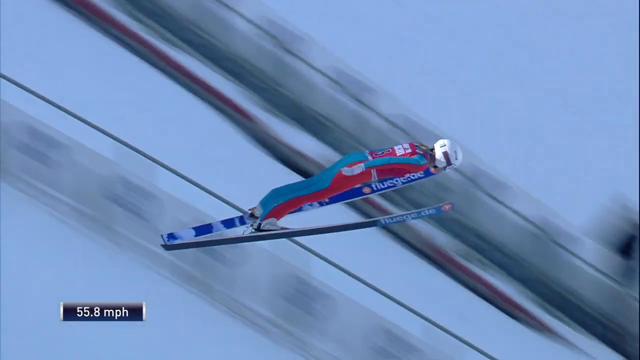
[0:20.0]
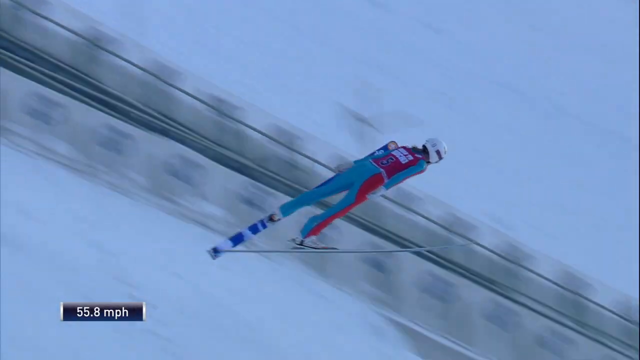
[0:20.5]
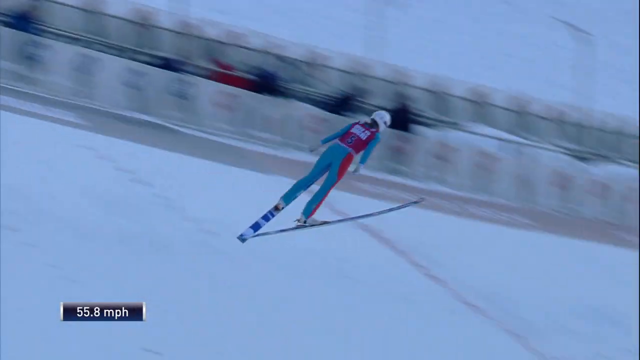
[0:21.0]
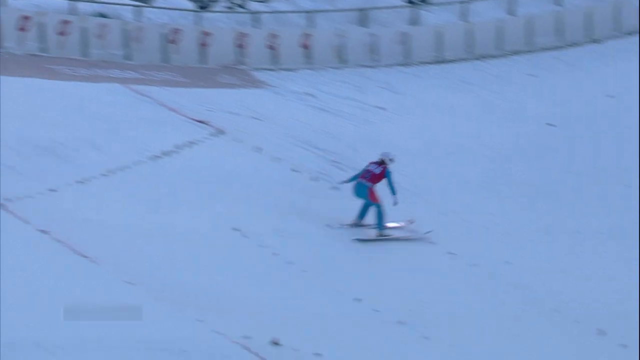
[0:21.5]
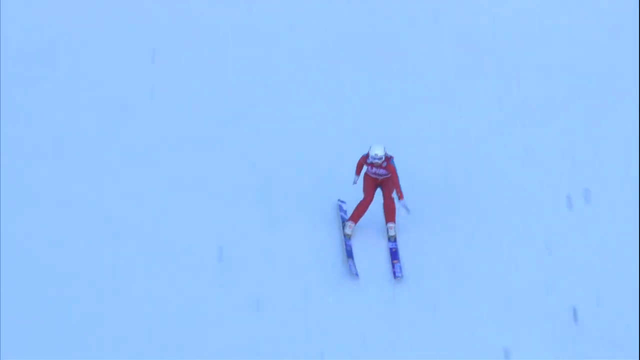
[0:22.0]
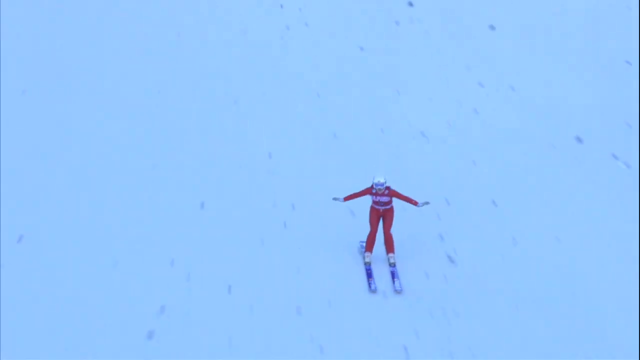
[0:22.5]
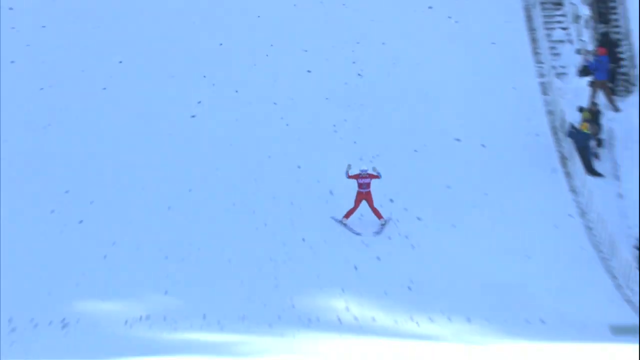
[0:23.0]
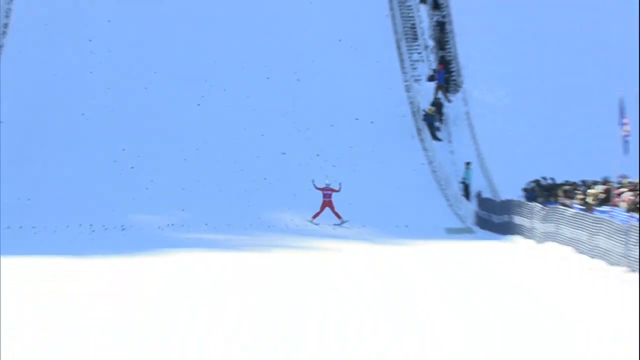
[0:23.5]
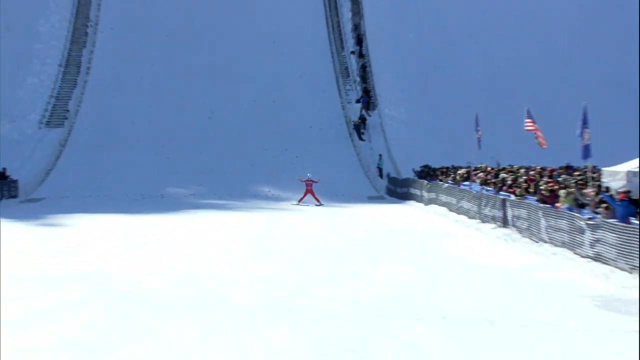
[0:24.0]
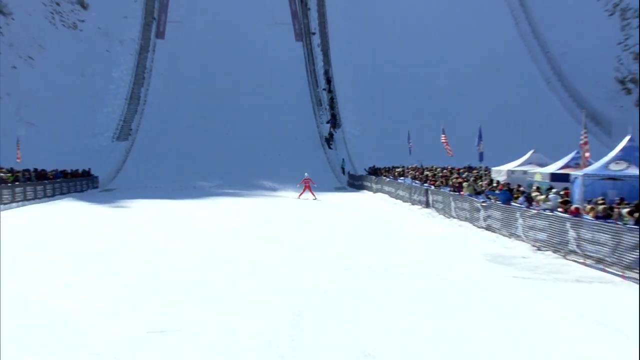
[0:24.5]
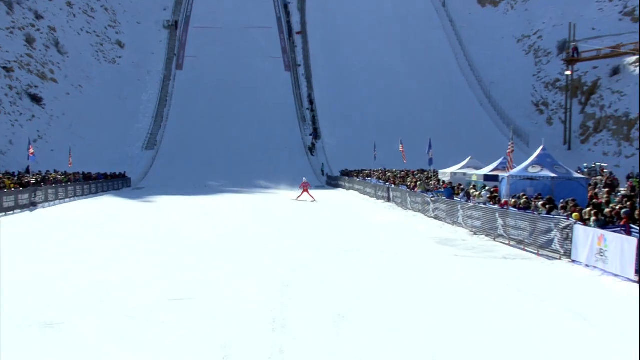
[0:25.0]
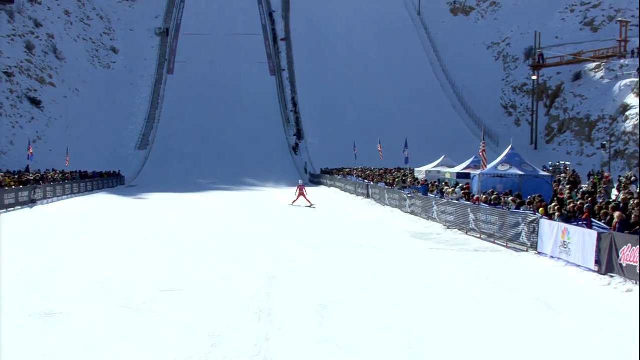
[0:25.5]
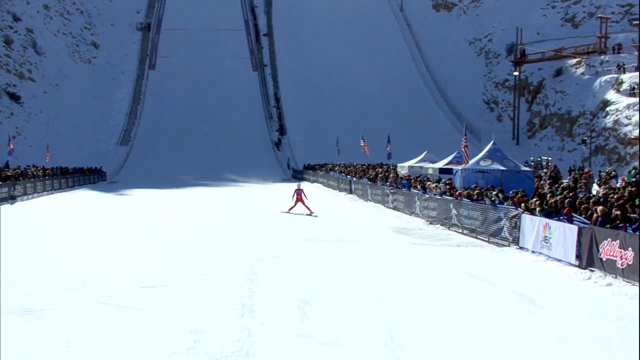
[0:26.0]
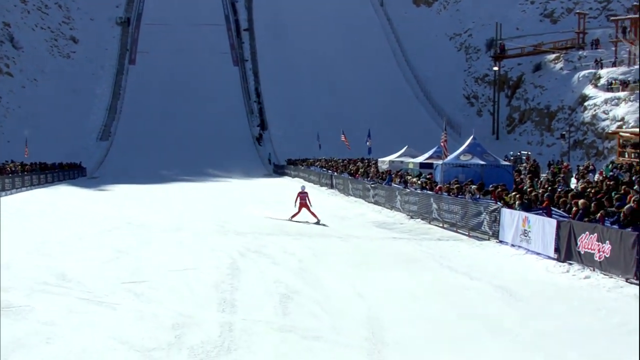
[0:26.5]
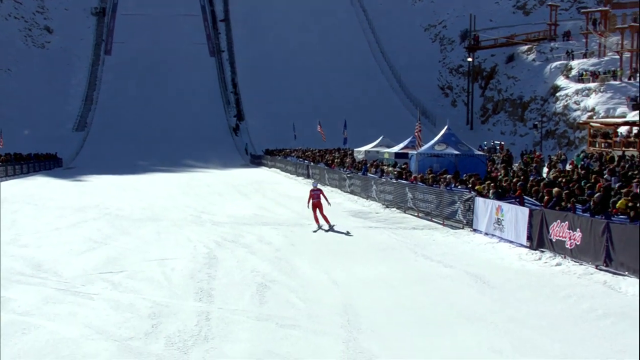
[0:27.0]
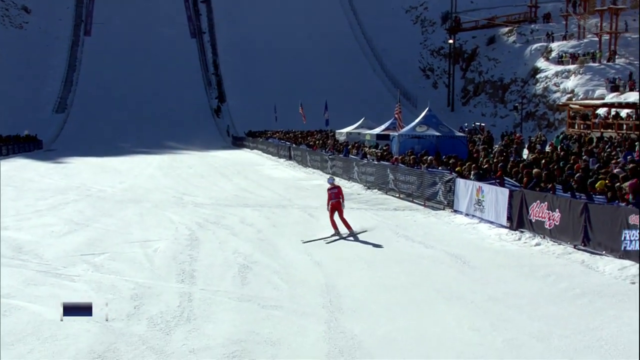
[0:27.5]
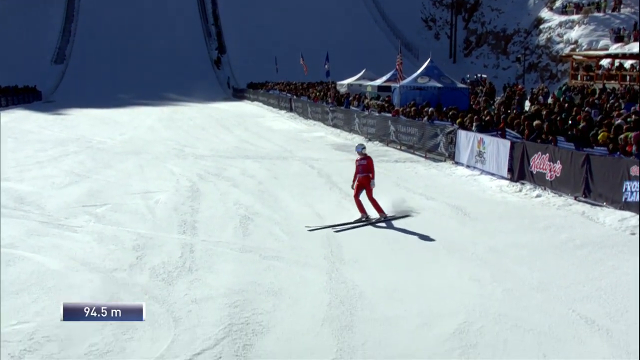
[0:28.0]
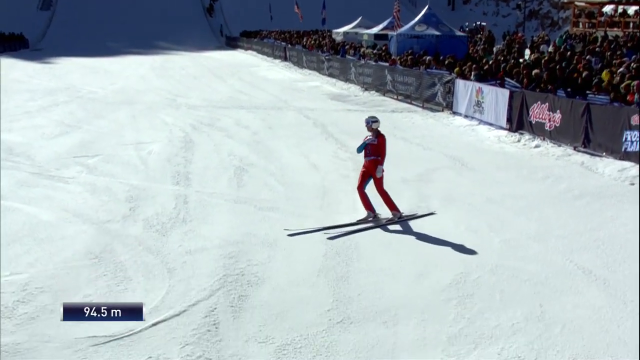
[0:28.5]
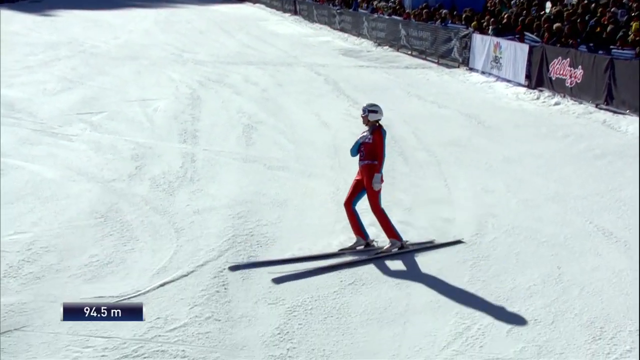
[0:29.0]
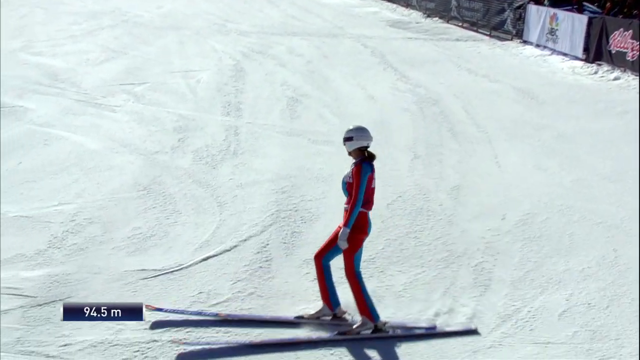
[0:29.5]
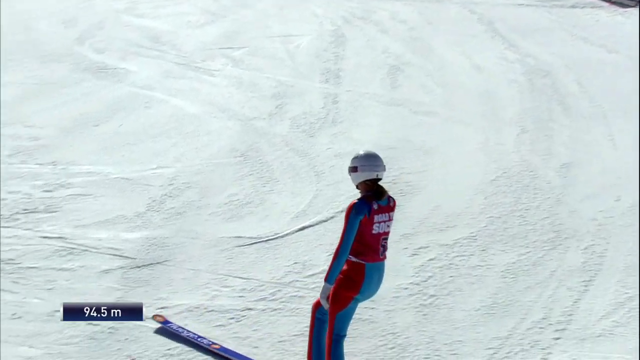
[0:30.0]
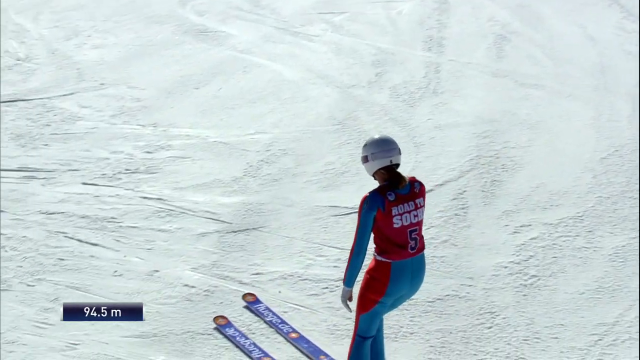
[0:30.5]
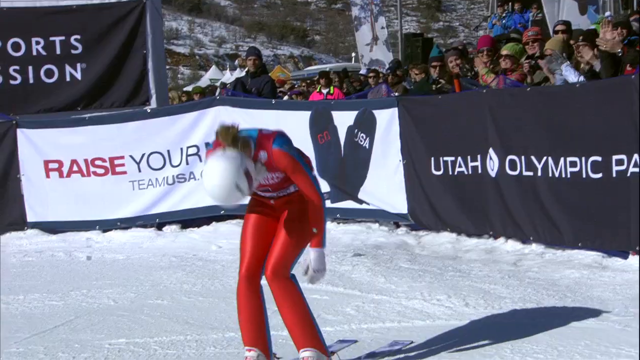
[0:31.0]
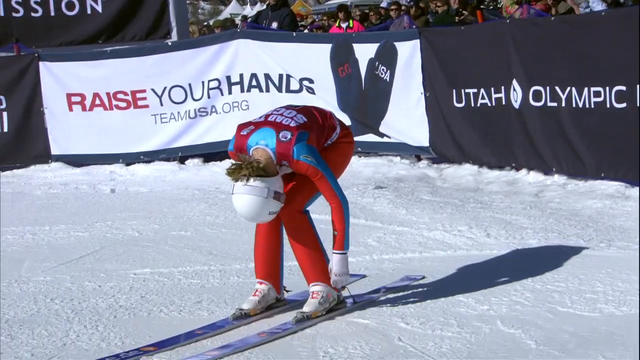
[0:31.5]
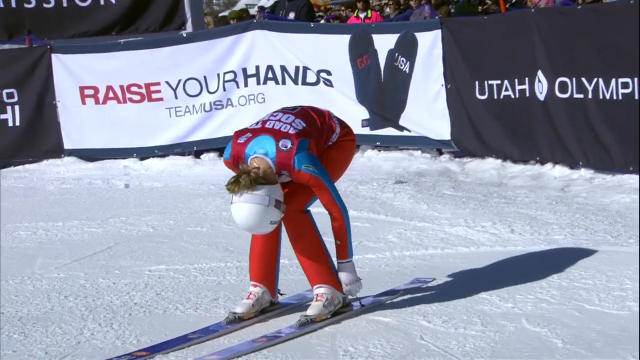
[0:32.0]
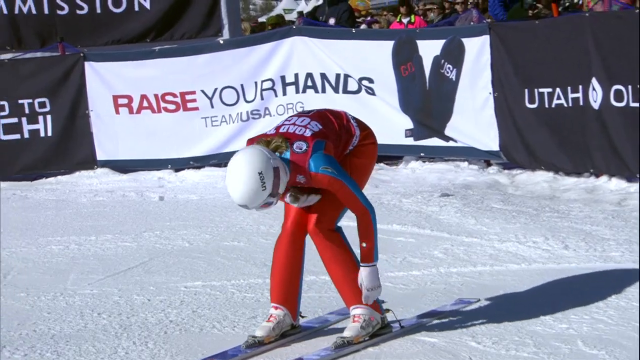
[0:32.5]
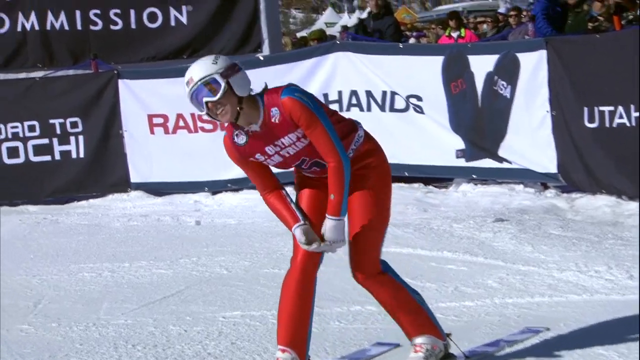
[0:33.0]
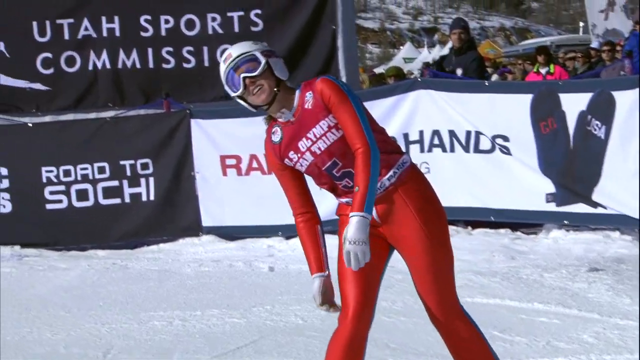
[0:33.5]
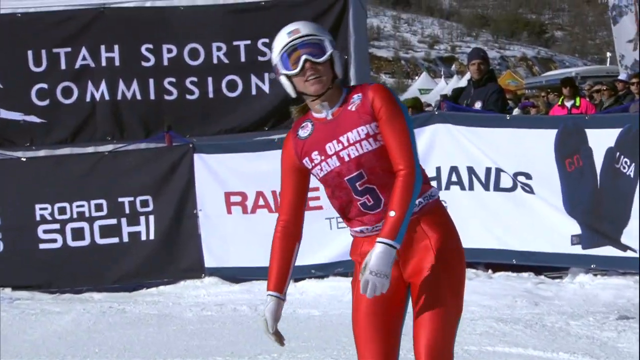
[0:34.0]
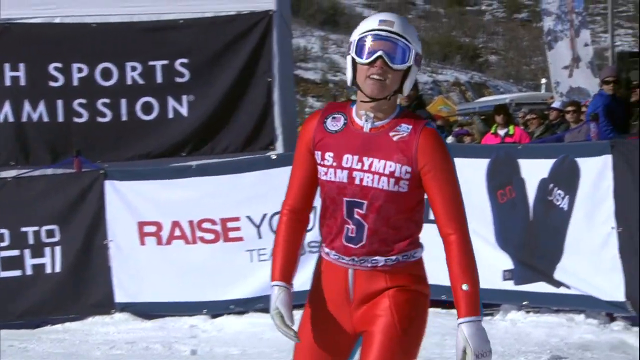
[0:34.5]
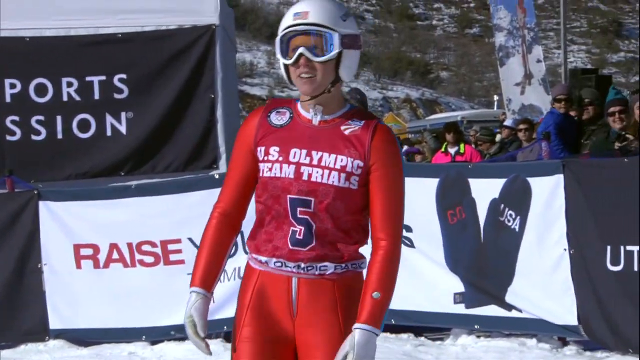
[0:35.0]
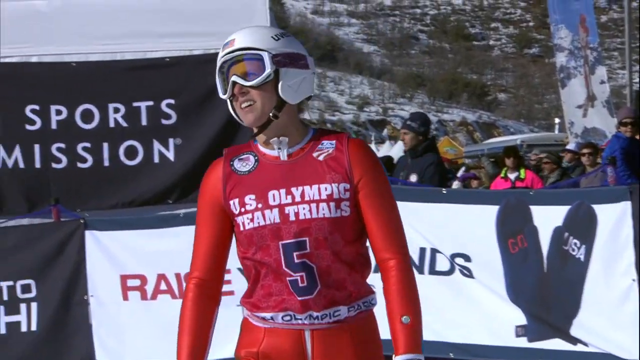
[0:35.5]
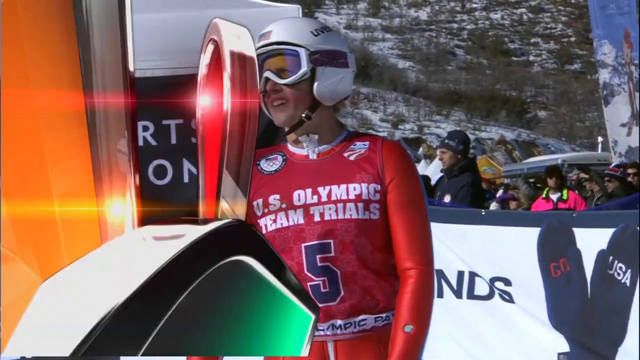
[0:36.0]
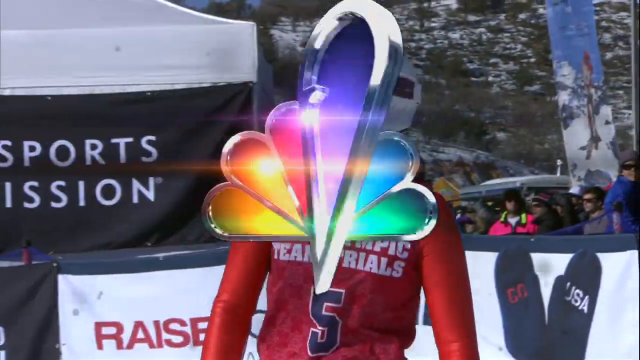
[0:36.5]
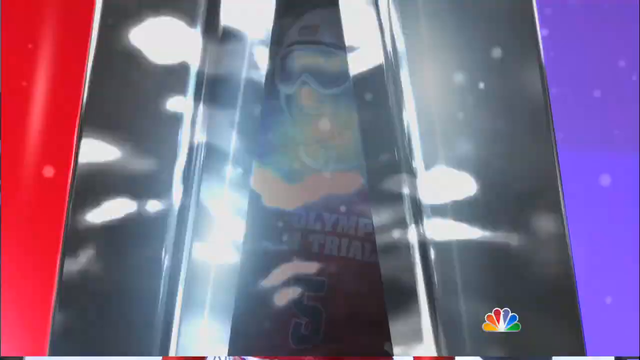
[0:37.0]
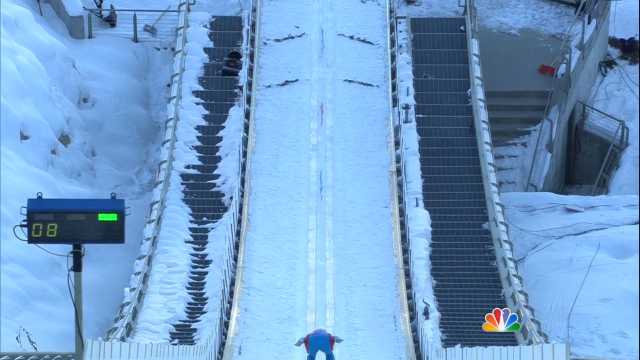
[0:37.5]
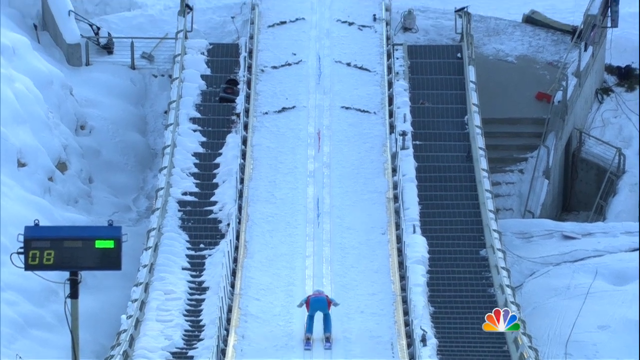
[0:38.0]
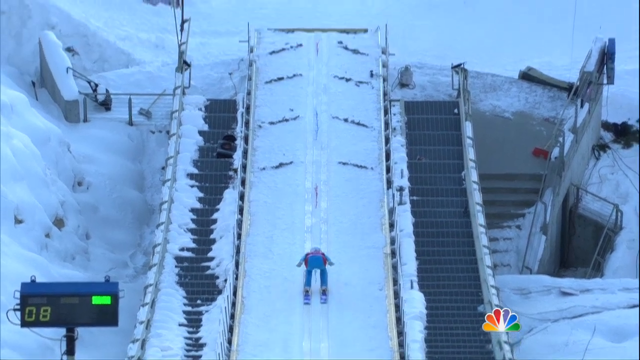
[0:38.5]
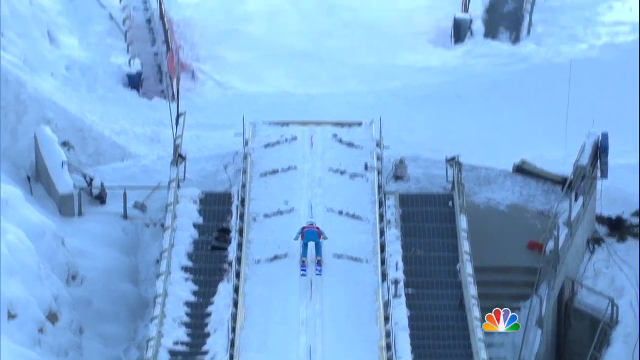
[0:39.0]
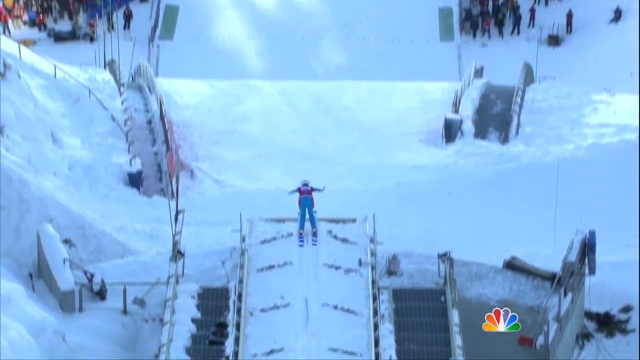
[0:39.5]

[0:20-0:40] The skier, in a red and white outfit and blue skis, soars through the air. Her skis spread apart as she nears the ground, then she brings them closer together as their bottoms make contact and she lands. She crouches to brace for impact as she continues down the rest of the slope, and the camera zooms out. After landing, she spreads her arms out and raises them above her head as if celebrating a successful jump. She reaches the bottom of the slope, where crowds of people on both her left and right clap and applaud her landing. She moves closer toward the camera, turns her body to the right, and digs her skis into the ground to slow down. She raises her right hand to her heart as if overwhelmed by the experience. She skids to a stop directly in front of the camera and bends down to adjust a buckle on her skis. She lifts her head and leans it back as if surprised and overwhelmed. The video then transitions to a replay showing a view from behind the skier as she goes up the ramp and flies into the air.